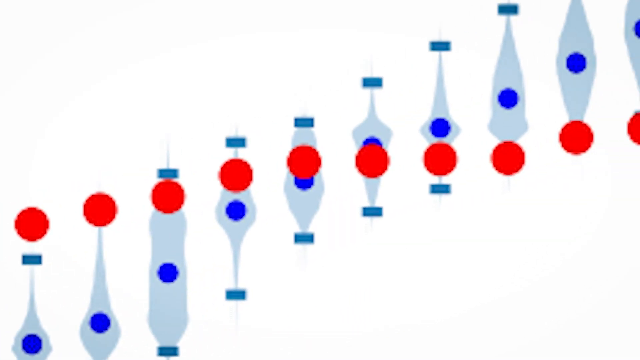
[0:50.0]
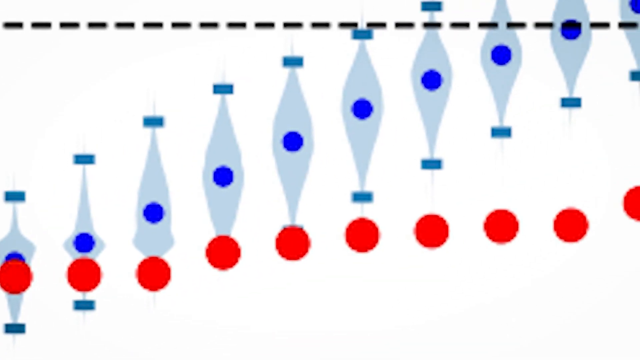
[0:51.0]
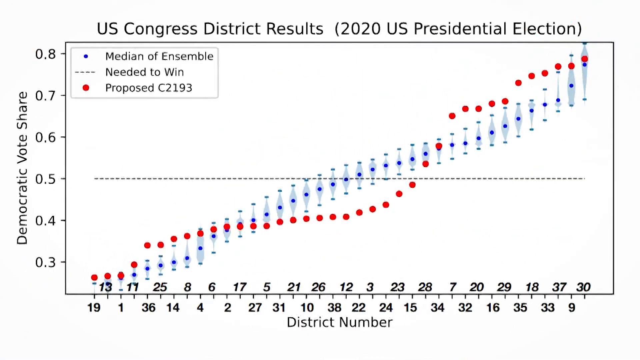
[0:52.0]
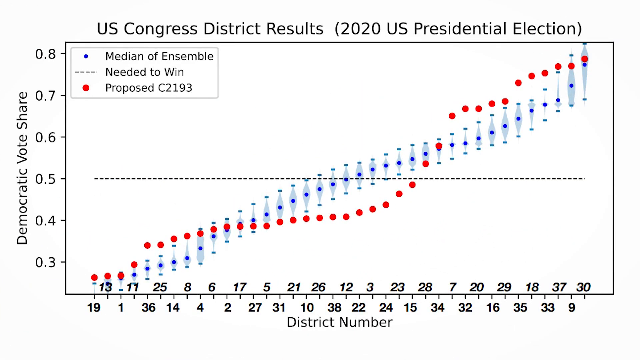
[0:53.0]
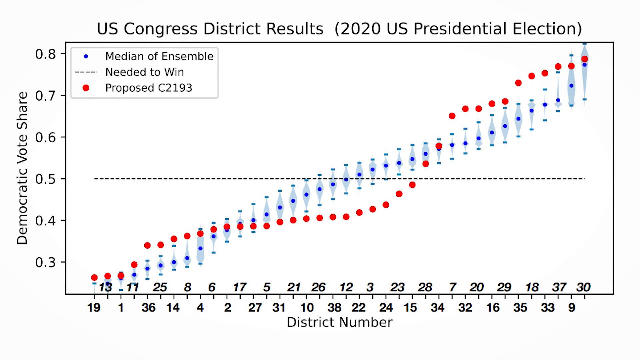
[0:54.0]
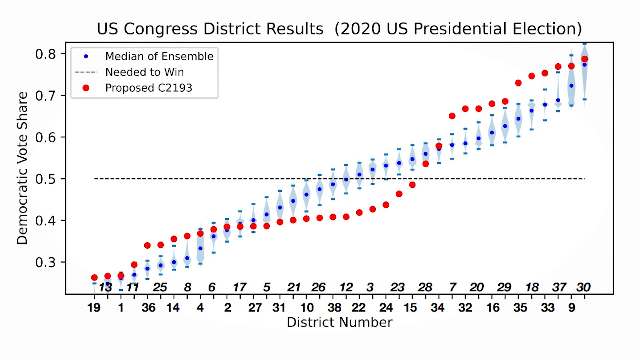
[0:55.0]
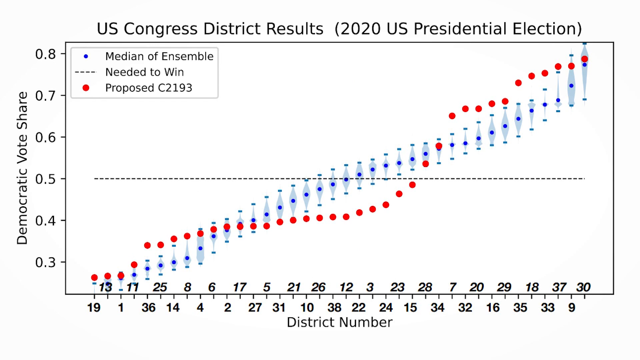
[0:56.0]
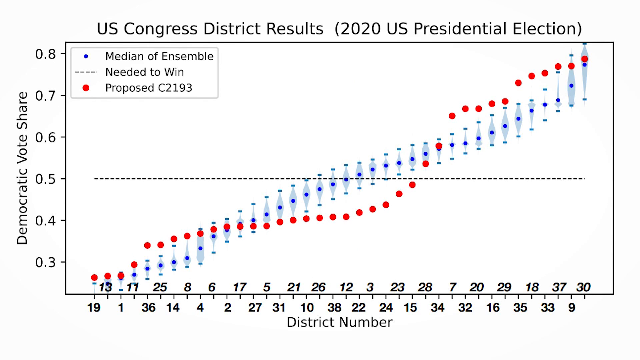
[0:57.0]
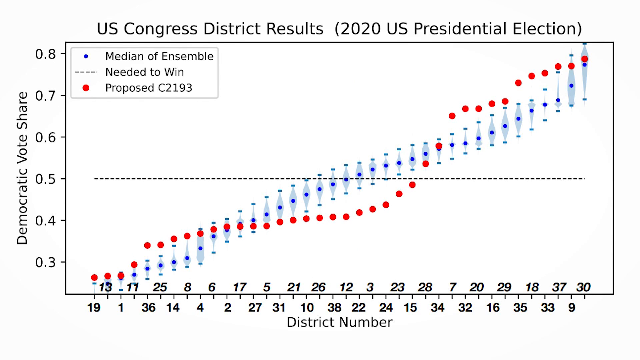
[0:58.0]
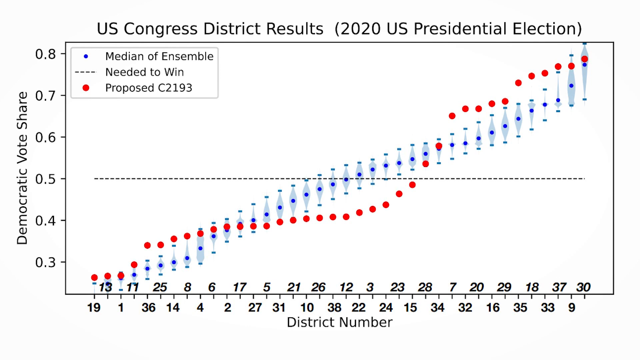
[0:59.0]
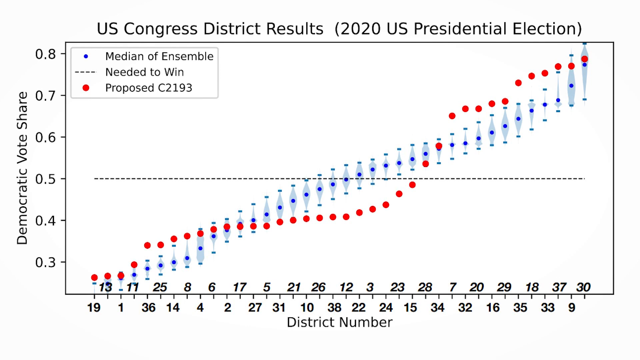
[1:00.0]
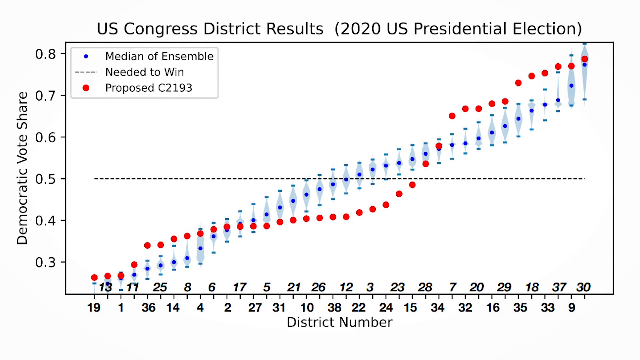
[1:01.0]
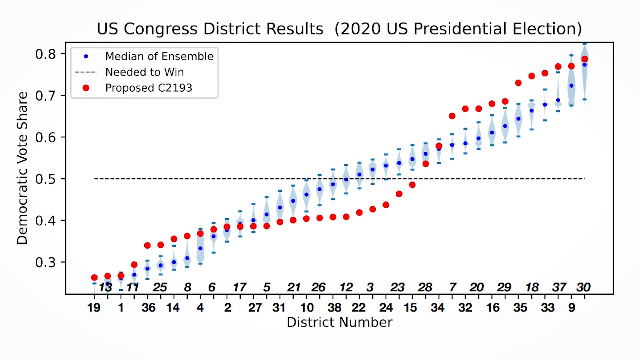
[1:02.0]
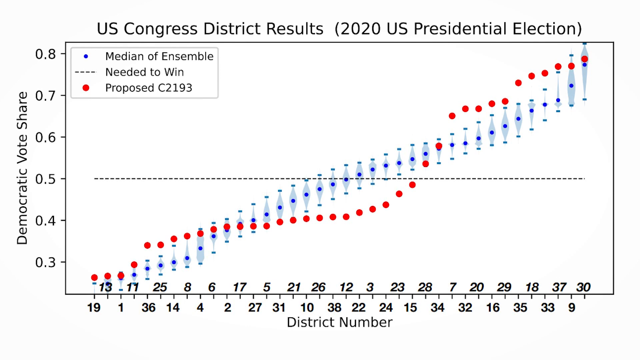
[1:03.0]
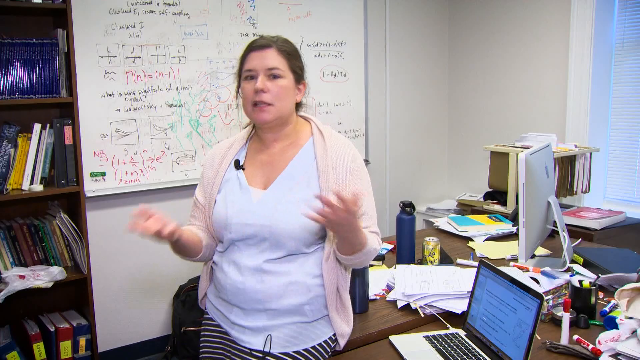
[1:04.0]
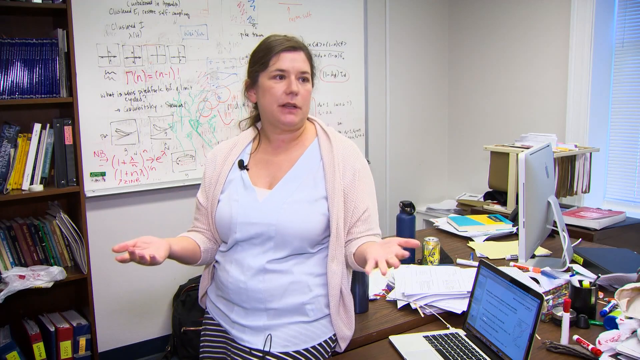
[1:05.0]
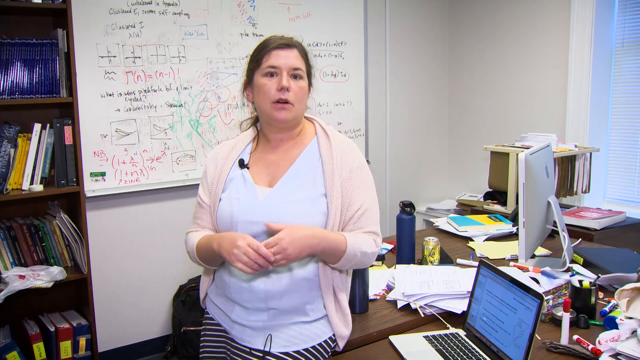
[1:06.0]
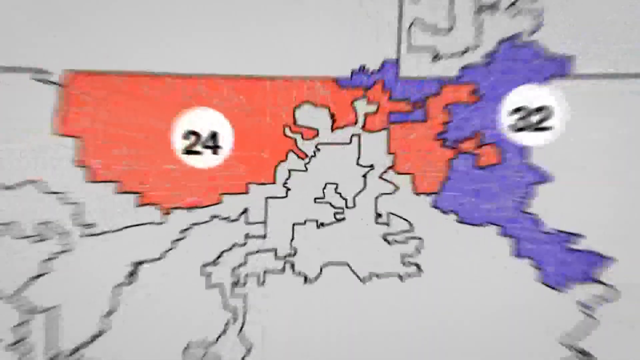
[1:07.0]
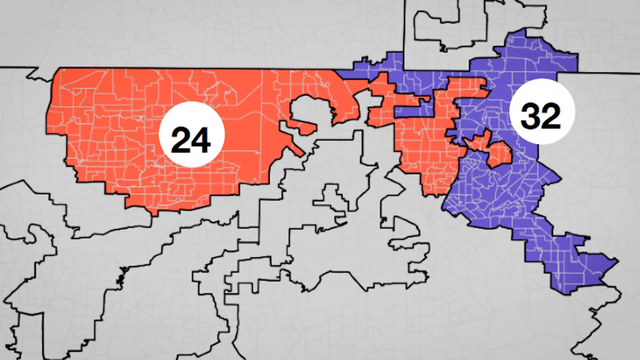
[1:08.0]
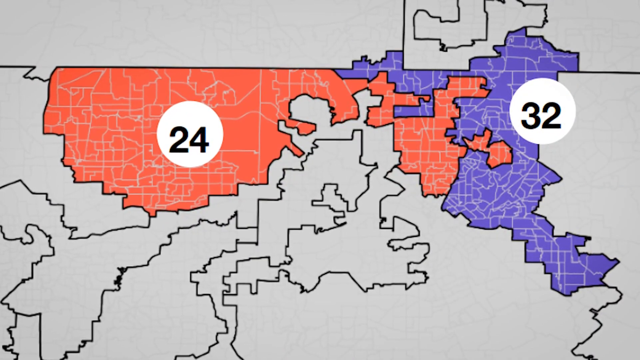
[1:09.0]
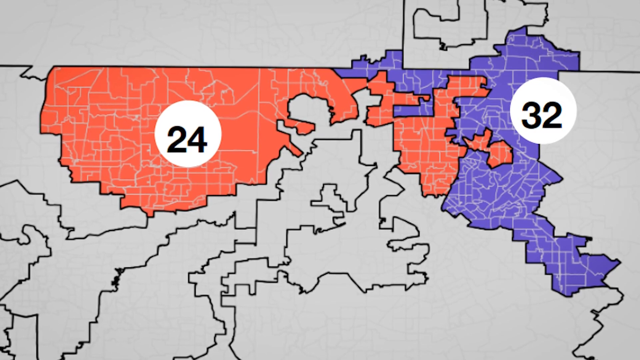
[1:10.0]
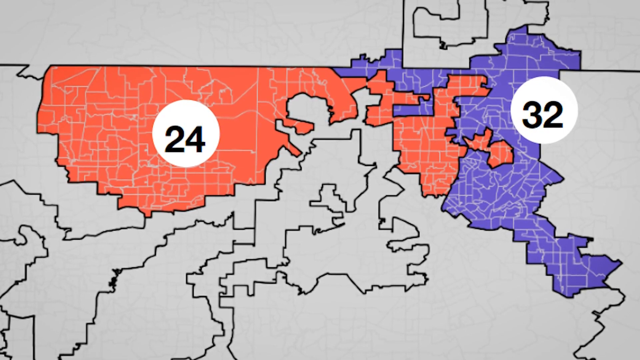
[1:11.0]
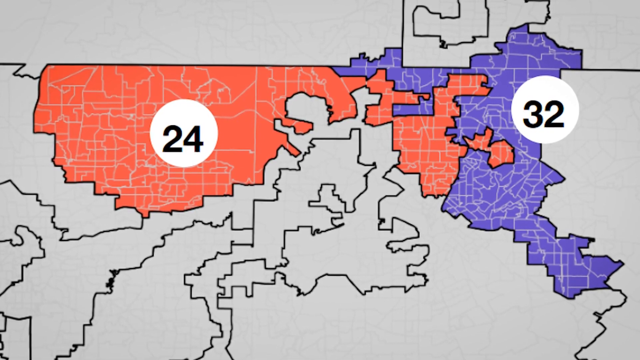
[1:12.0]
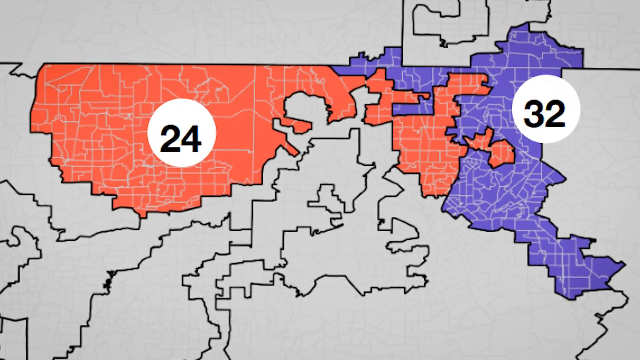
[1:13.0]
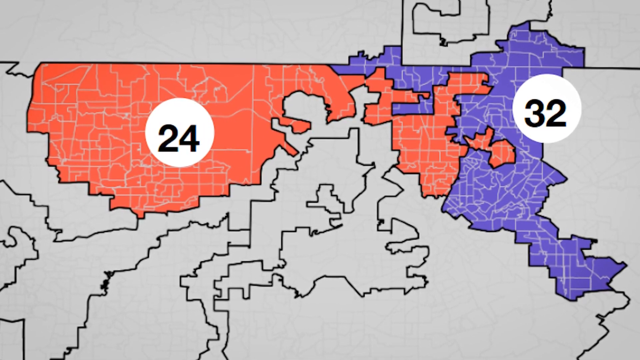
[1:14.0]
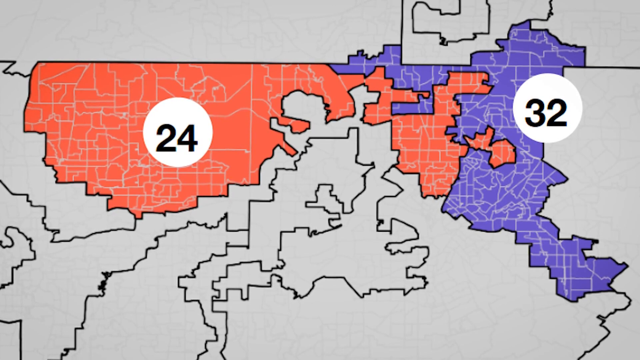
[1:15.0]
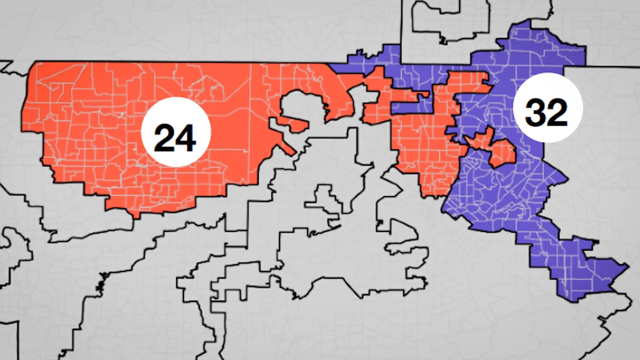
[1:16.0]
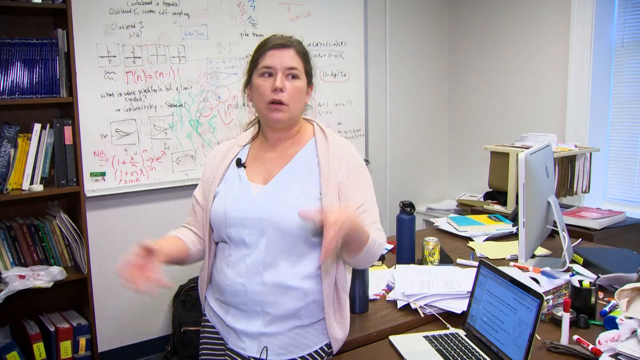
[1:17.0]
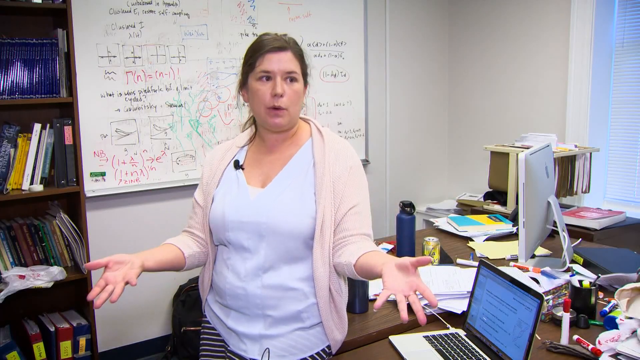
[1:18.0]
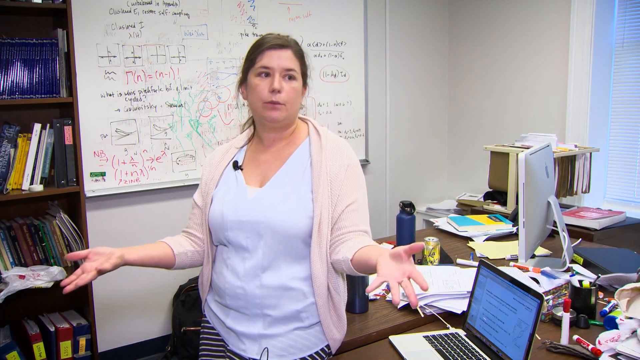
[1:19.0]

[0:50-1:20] A graph shows U.S. Congress district results from the 2020 U.S. presidential election. Blue dots represent "median of ensemble," blue dashed lines indicate "needed to win," and a red dot indicates "proposed C2193." The vertical axis on the left of the graph reads "Texas's Democrat vote share." The graph stays on screen for several seconds before the video switches back to the teacher being interviewed. It then moves to another county-level map of Texas showing one county with 24 seats and another with 32. The news segment breaks down the divide between Republican and Democratic house seats.